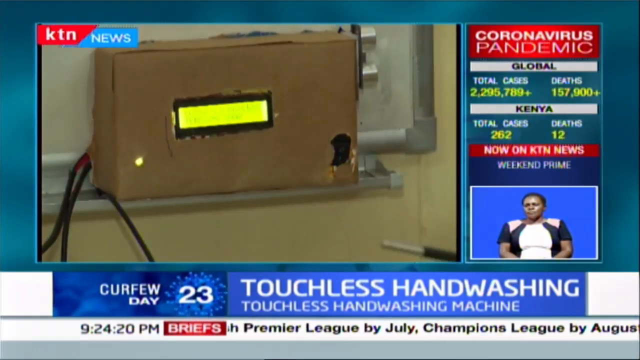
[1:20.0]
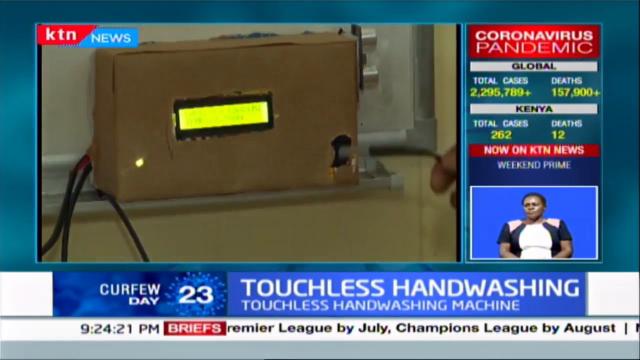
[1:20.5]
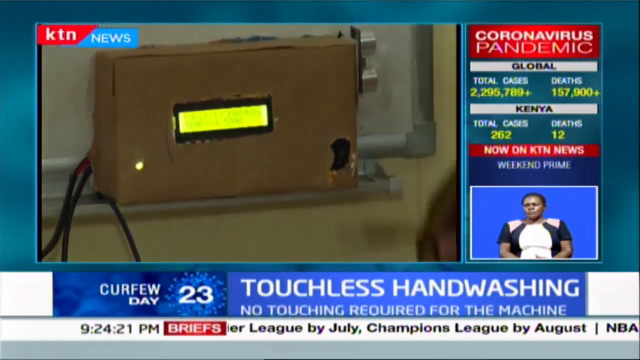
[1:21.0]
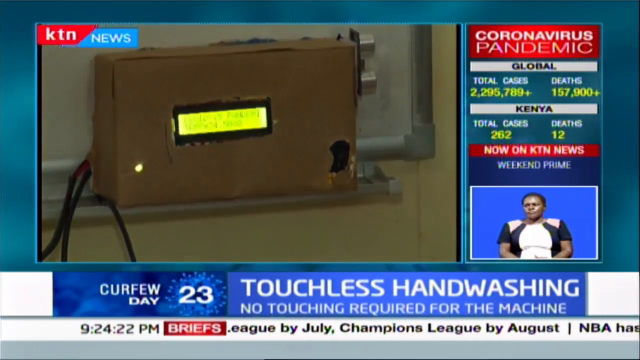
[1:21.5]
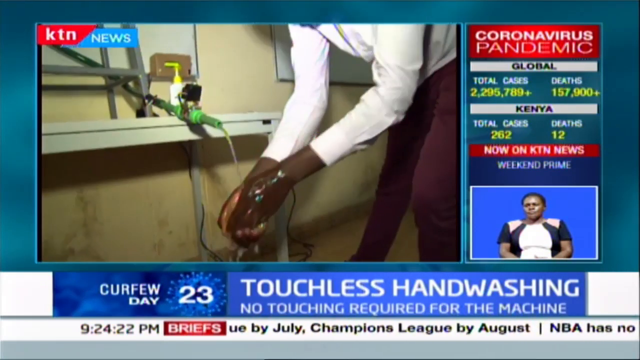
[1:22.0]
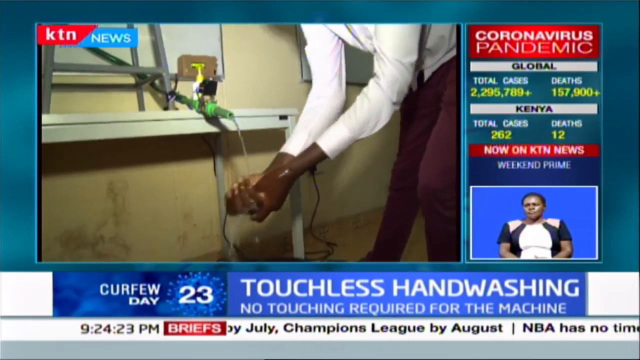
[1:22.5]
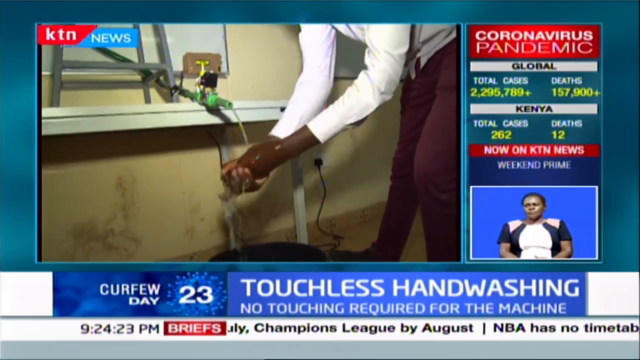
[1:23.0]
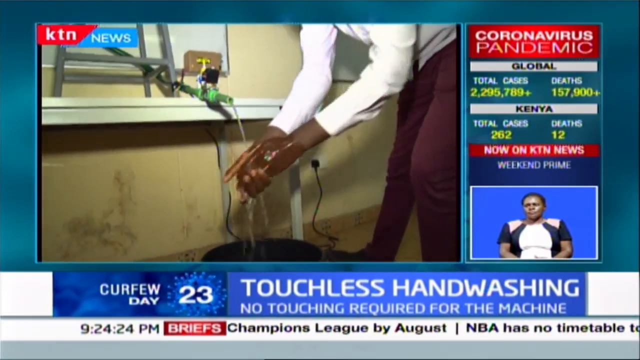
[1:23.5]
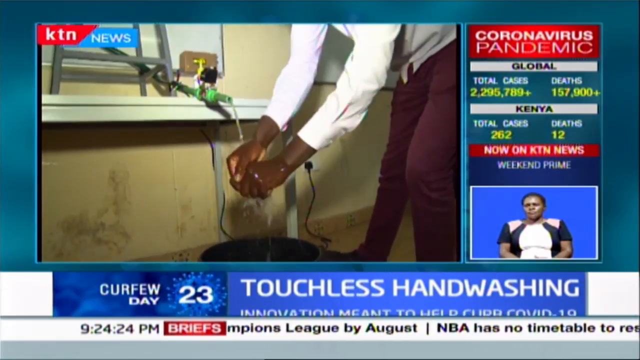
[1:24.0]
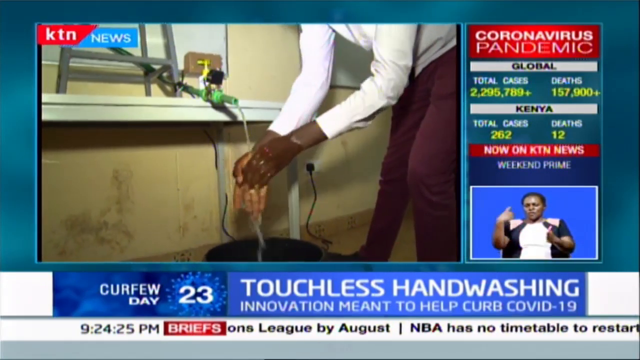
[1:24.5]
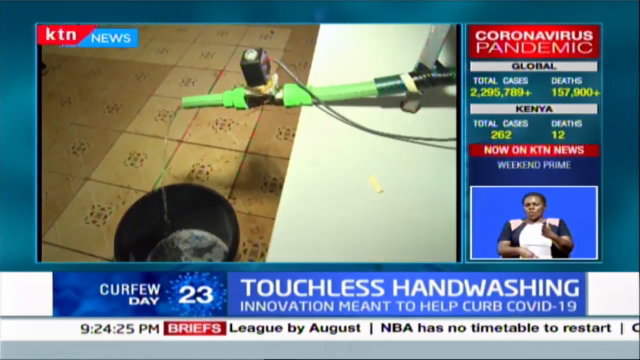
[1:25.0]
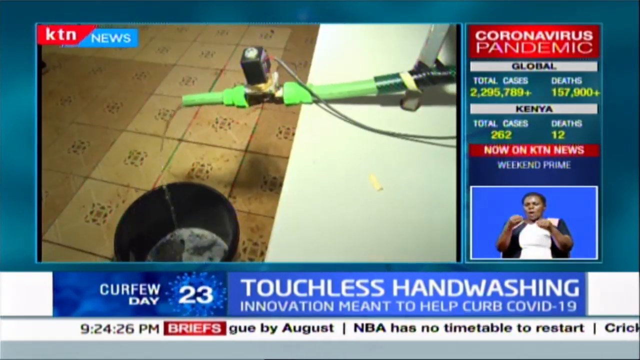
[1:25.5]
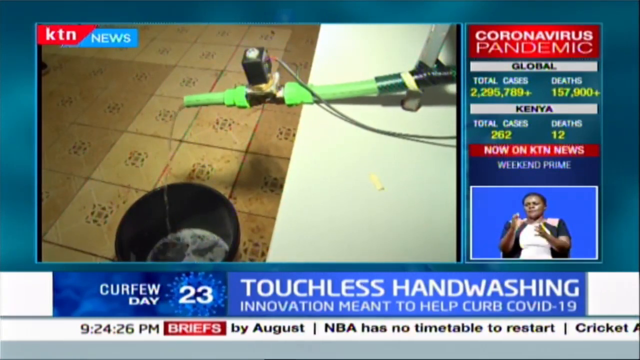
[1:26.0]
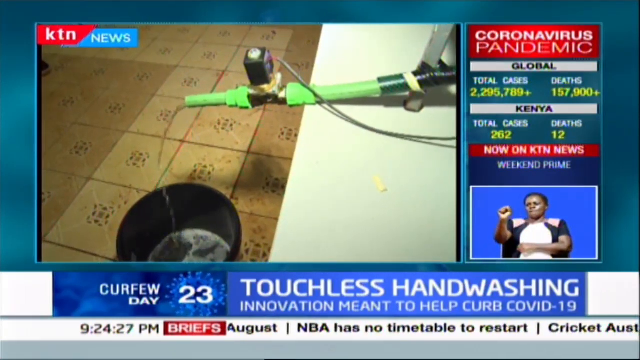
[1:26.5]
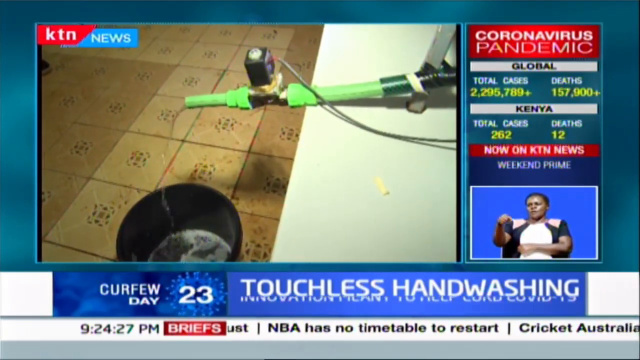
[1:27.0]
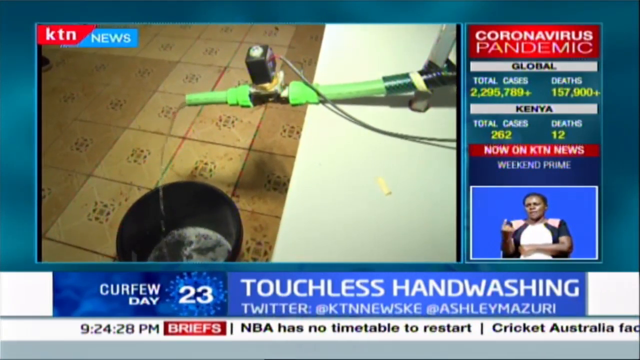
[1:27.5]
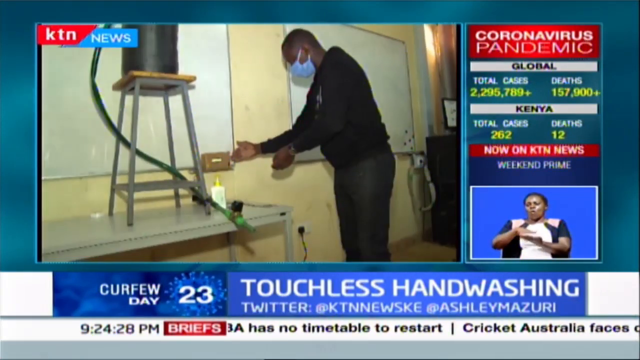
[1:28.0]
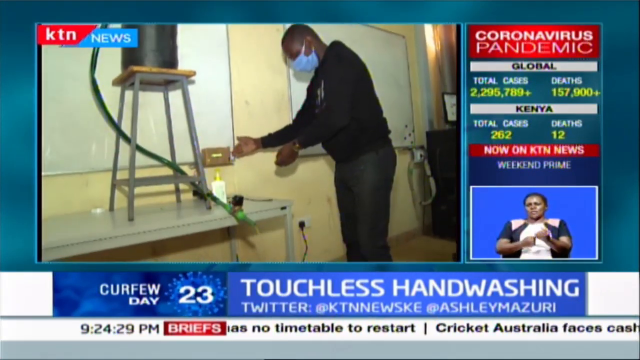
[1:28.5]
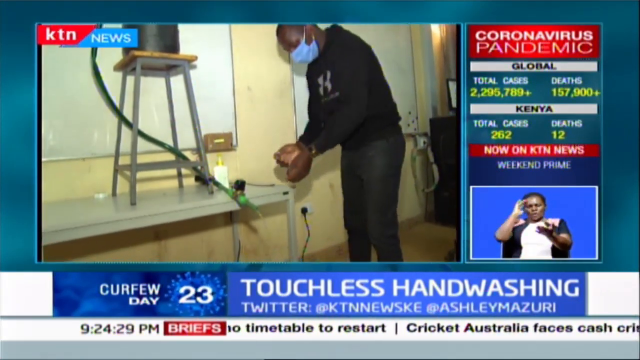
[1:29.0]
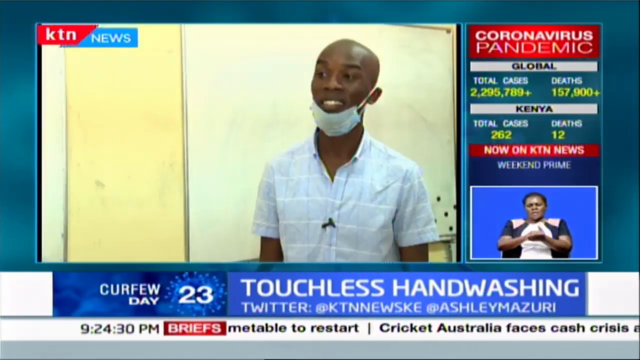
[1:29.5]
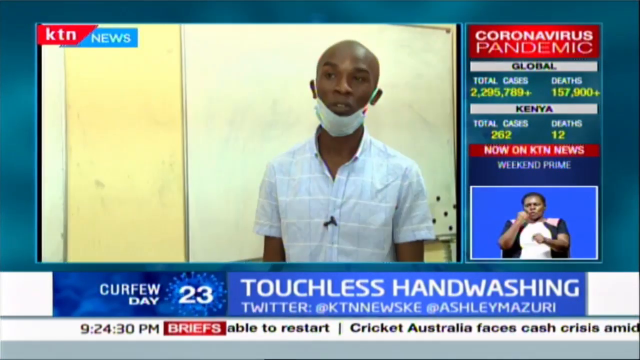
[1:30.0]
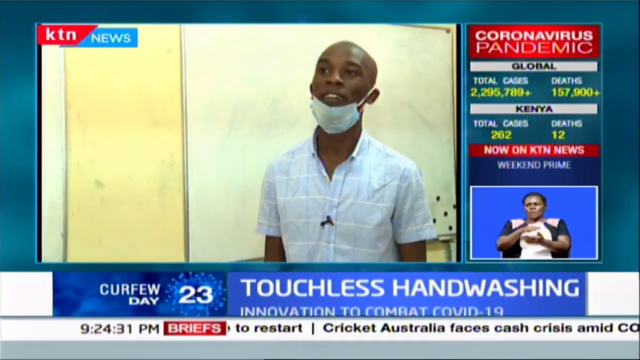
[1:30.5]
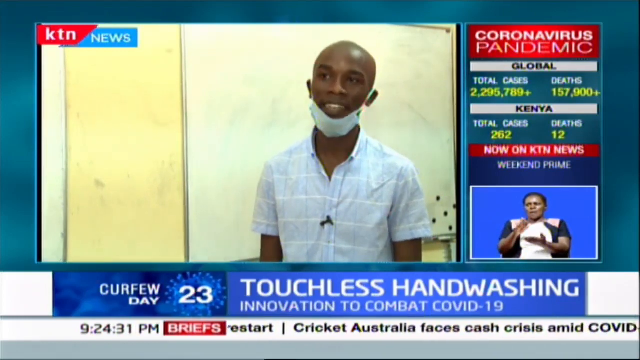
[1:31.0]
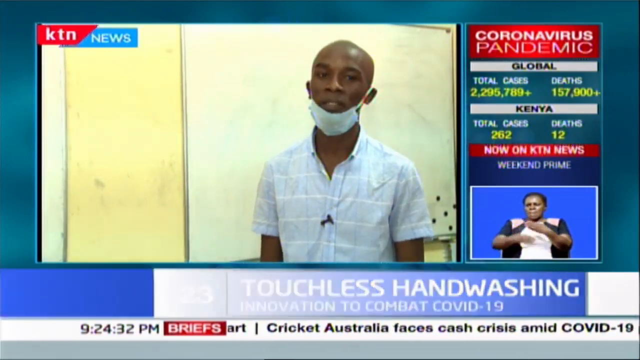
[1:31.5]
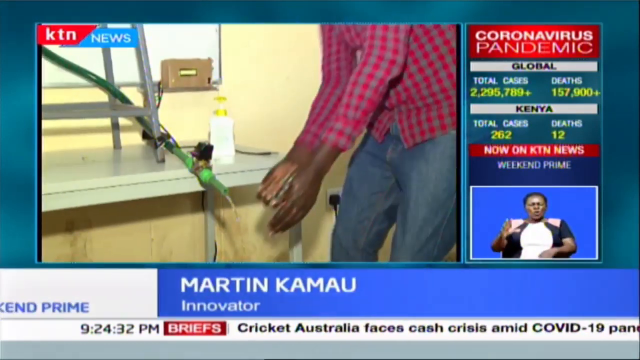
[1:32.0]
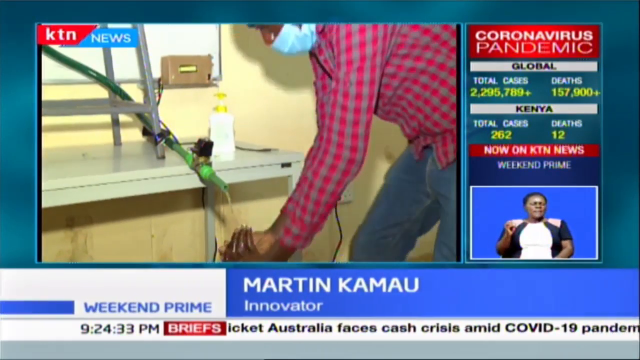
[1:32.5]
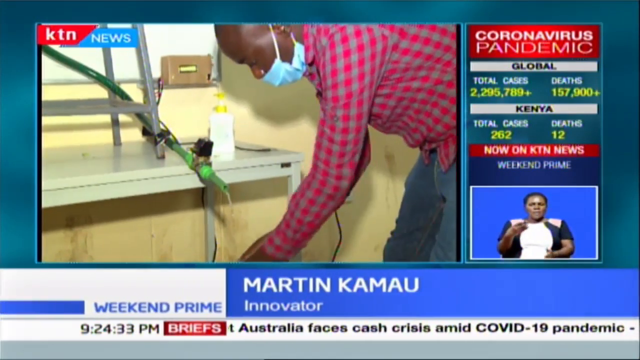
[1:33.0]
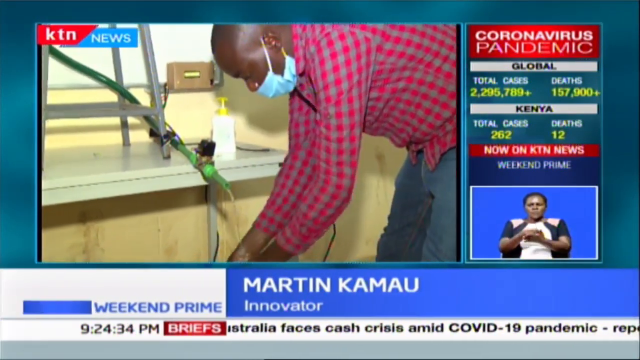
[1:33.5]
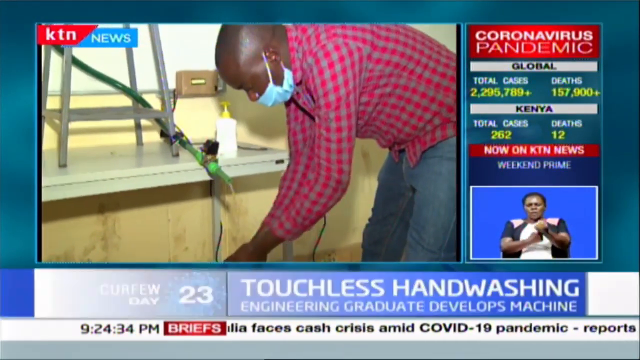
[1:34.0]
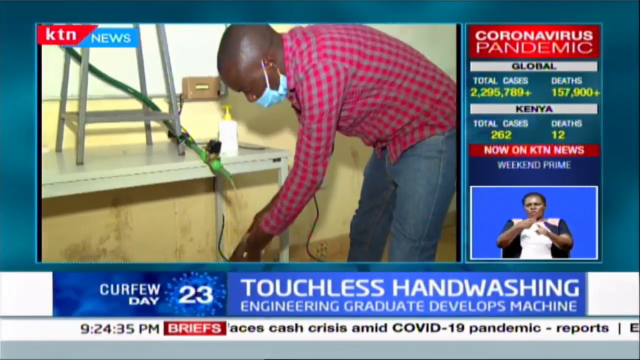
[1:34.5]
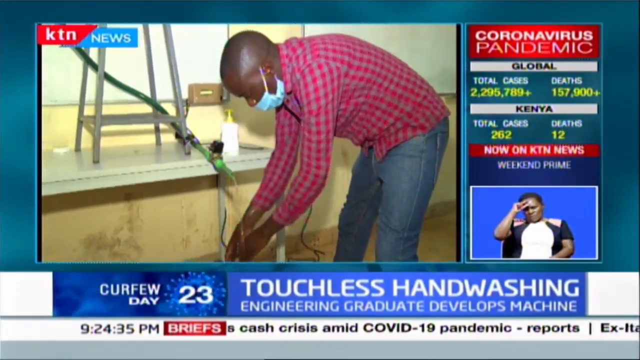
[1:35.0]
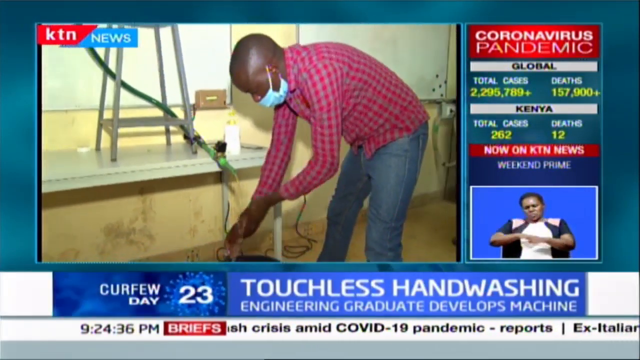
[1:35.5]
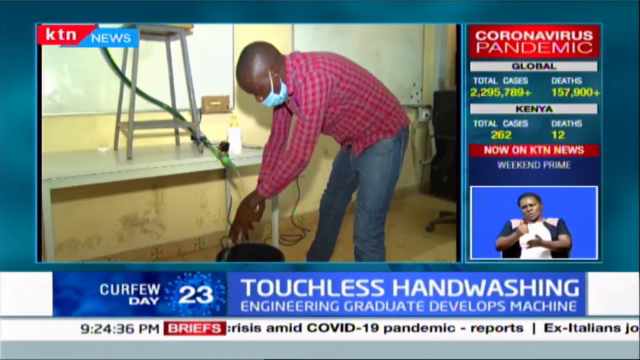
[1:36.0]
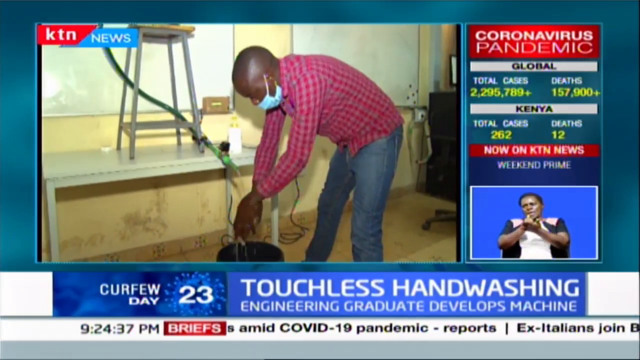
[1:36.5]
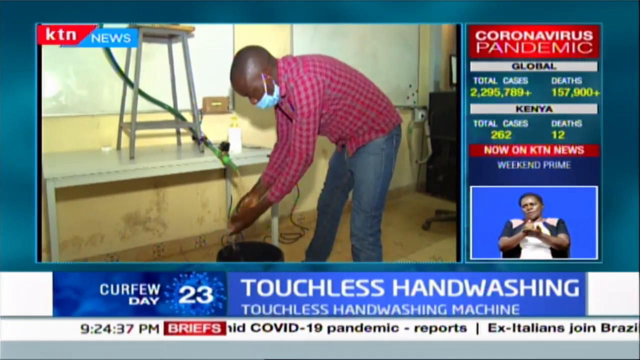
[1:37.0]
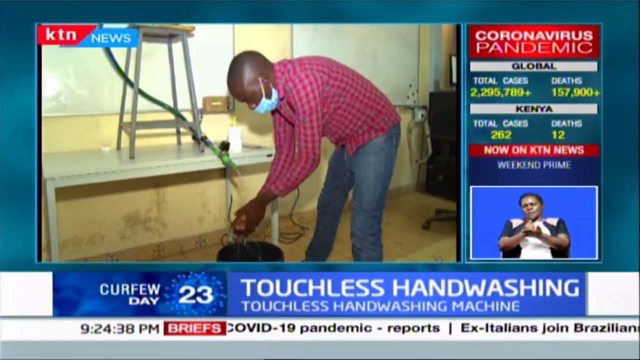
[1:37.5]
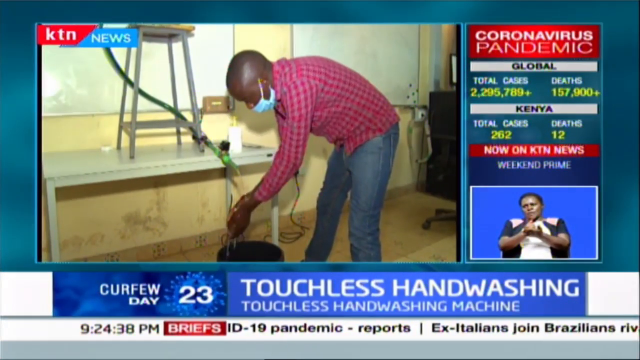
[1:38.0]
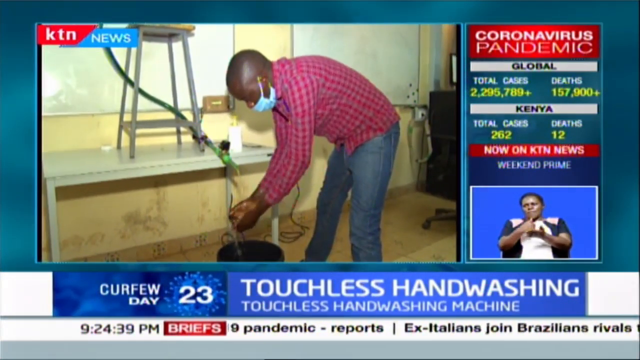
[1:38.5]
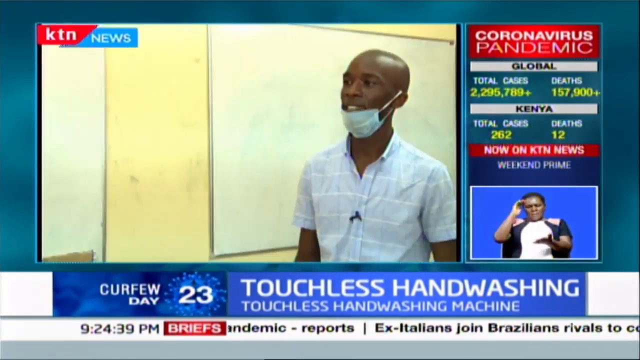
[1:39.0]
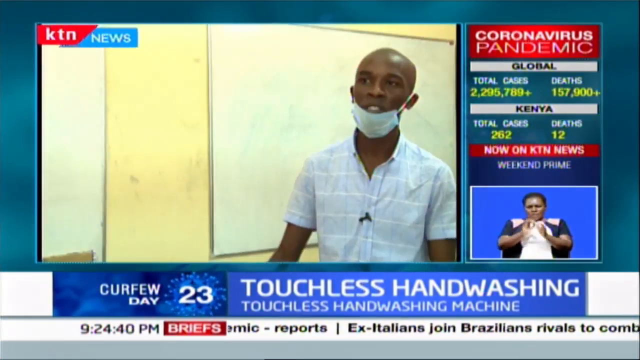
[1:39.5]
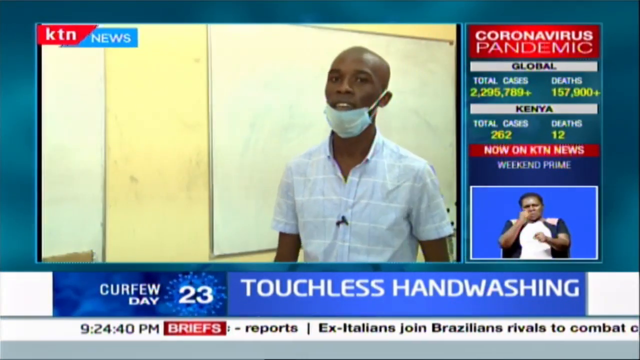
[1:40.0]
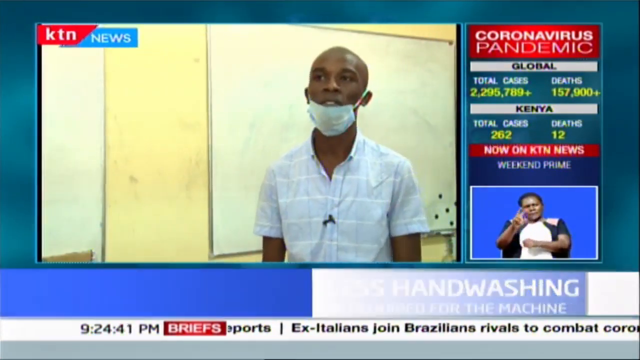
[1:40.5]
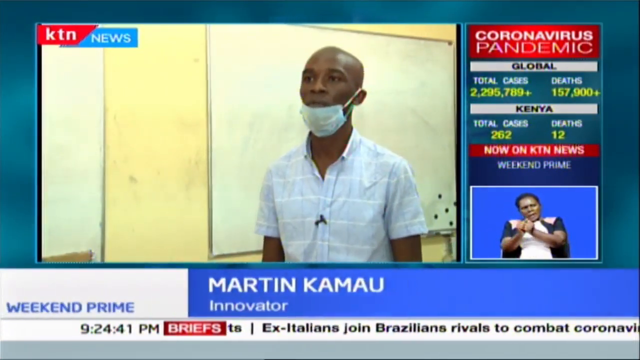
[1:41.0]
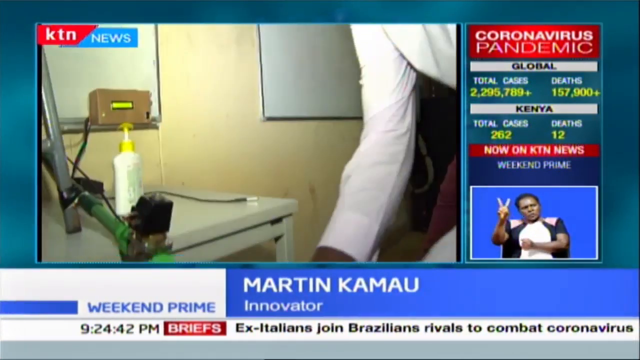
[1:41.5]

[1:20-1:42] The KTN News broadcast shows a contraption set up by either students or scientists: a water tank on top of a stand with a green hose coming out of it, apparently a water station for cleaning hands during the COVID-19 pandemic. An electrical box attached to the wall has an LED screen that says something about COVID-19. Several people come to the water station, use the soap on the table, and wash their hands with the water coming out of the dispenser. Apparently an electrical current runs through the water, probably to kill germs in it.